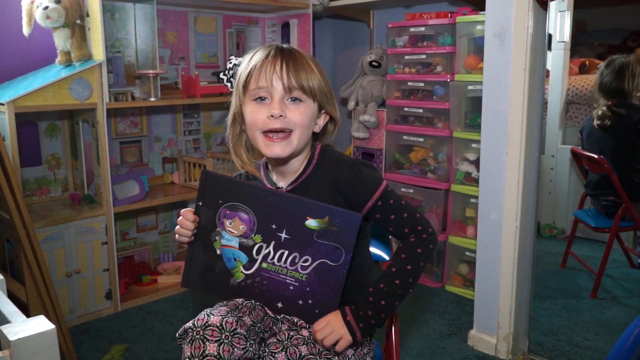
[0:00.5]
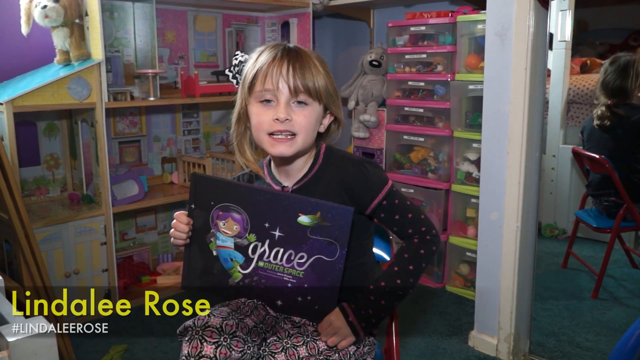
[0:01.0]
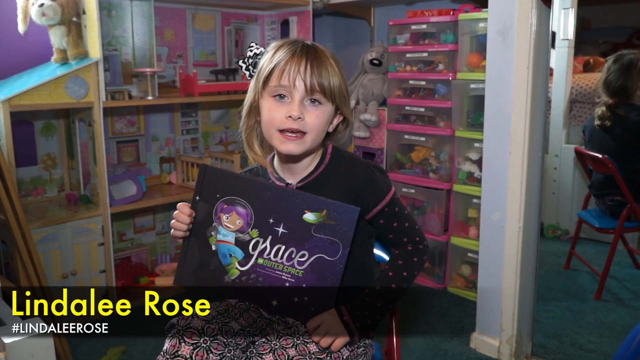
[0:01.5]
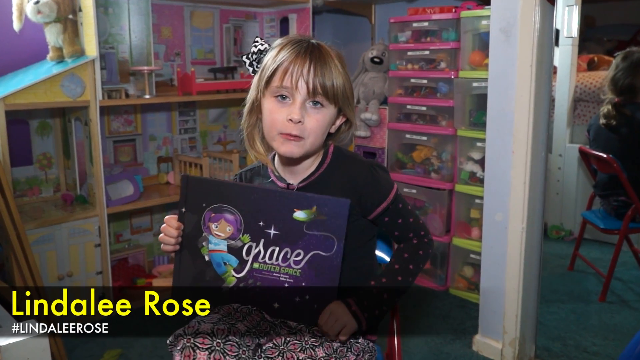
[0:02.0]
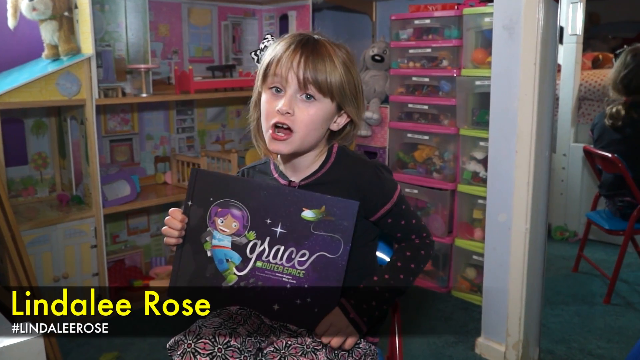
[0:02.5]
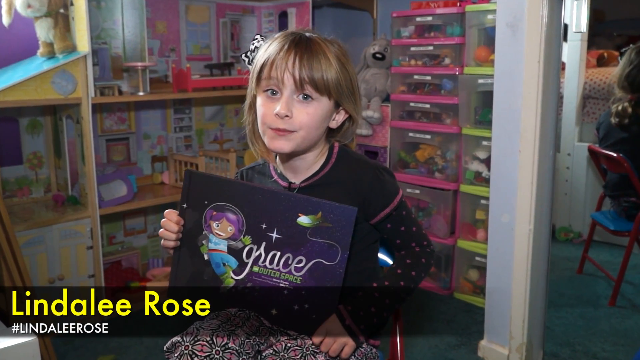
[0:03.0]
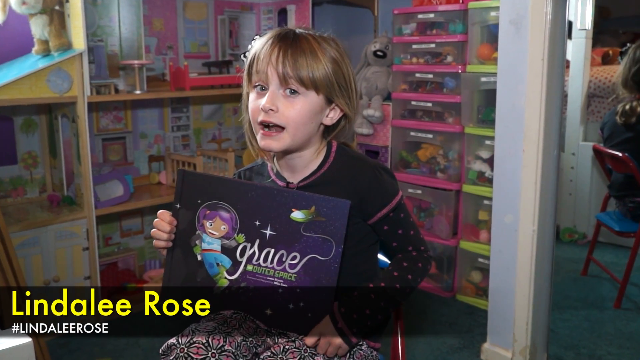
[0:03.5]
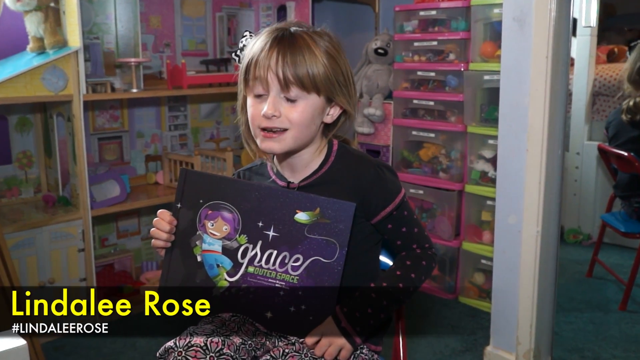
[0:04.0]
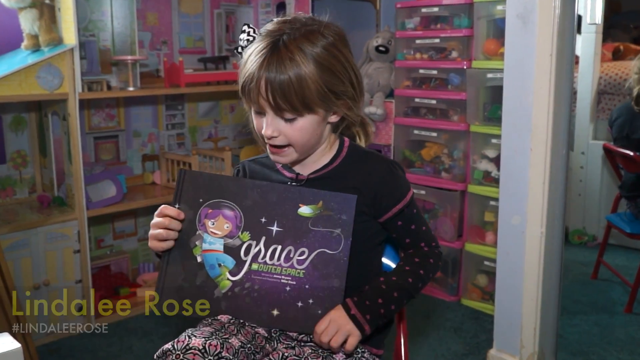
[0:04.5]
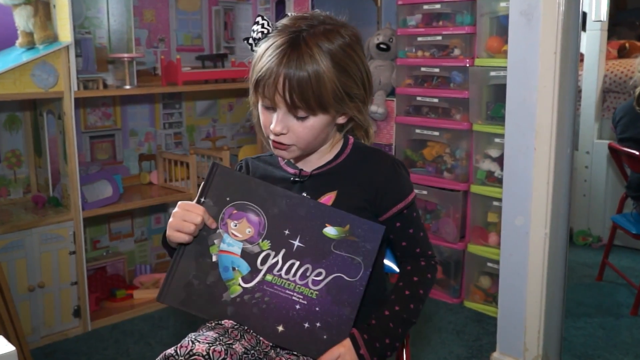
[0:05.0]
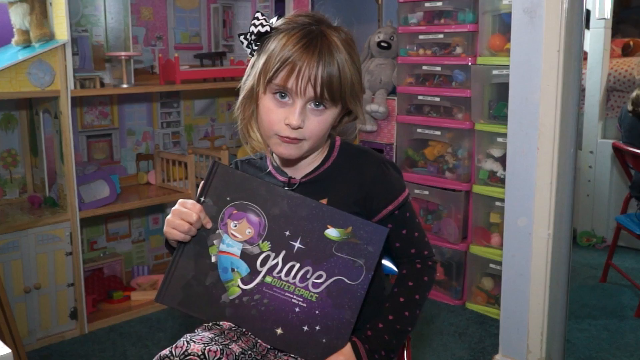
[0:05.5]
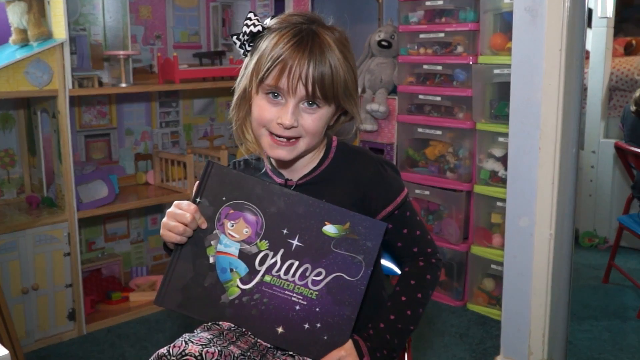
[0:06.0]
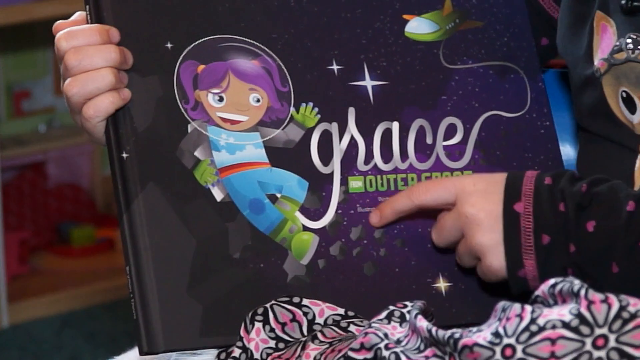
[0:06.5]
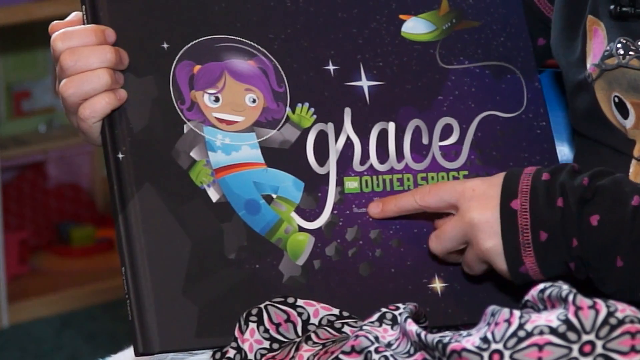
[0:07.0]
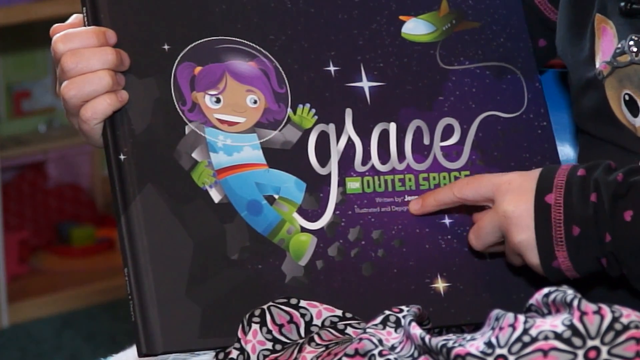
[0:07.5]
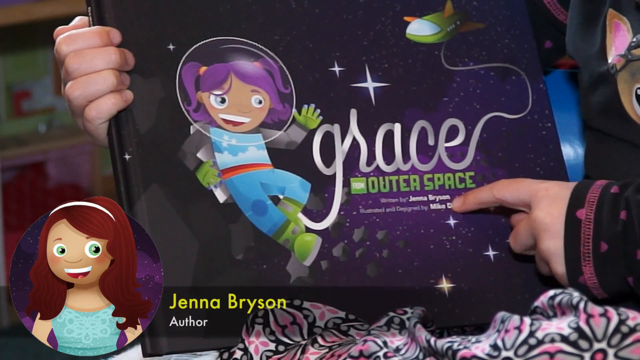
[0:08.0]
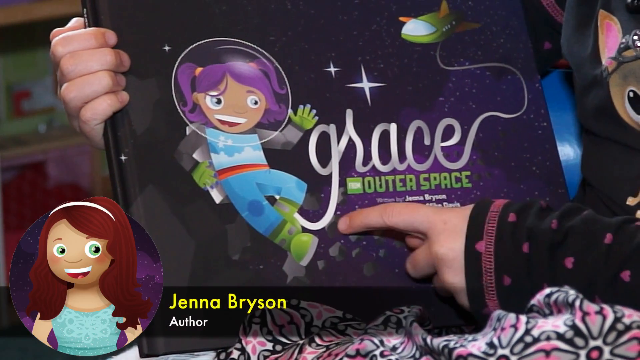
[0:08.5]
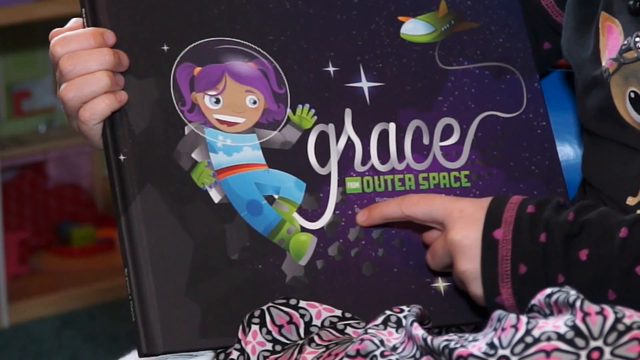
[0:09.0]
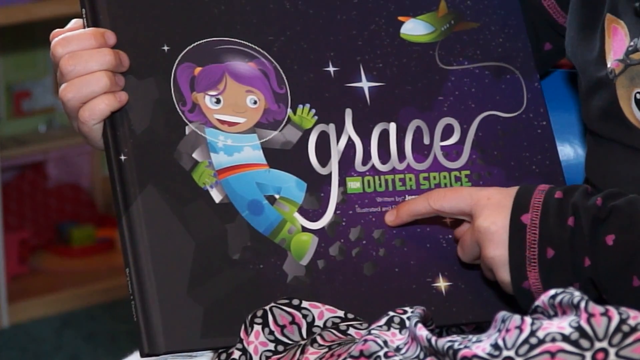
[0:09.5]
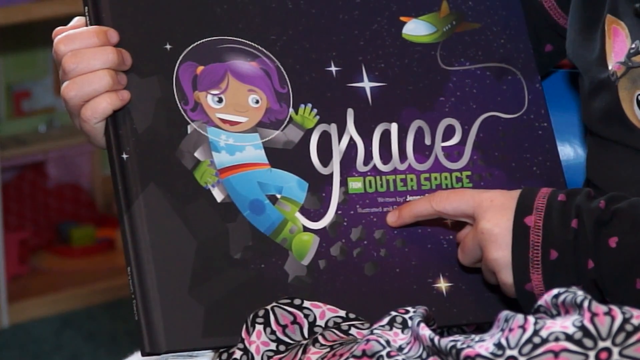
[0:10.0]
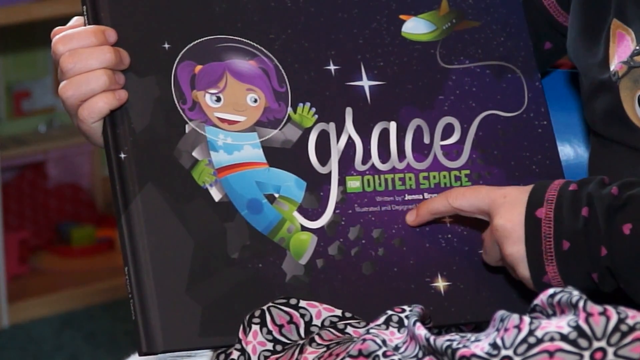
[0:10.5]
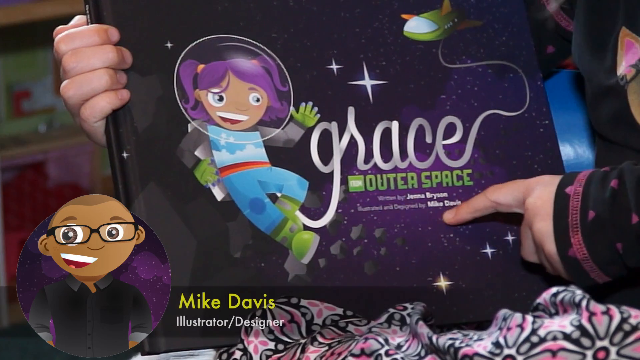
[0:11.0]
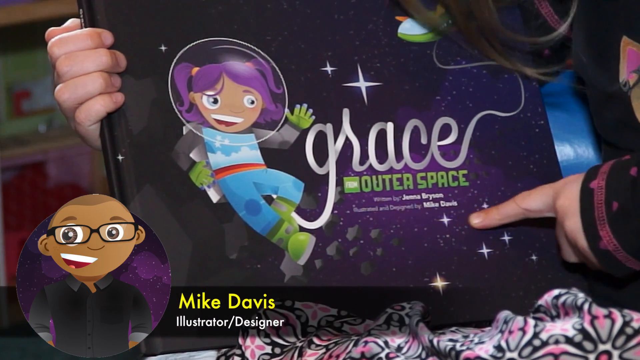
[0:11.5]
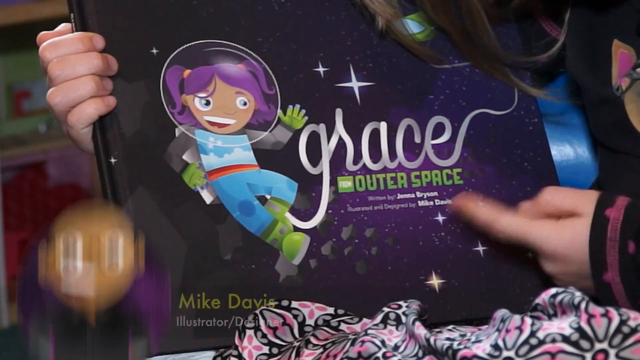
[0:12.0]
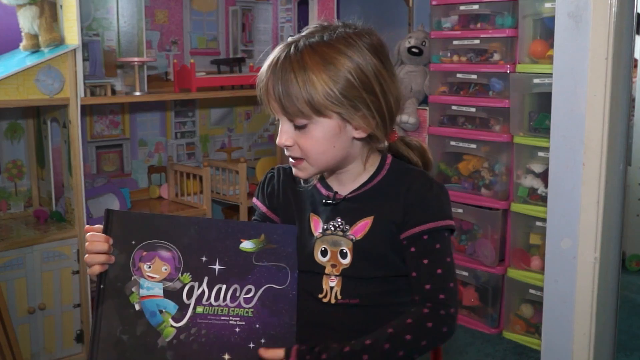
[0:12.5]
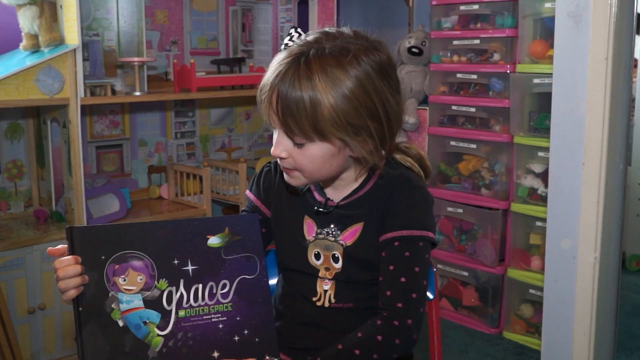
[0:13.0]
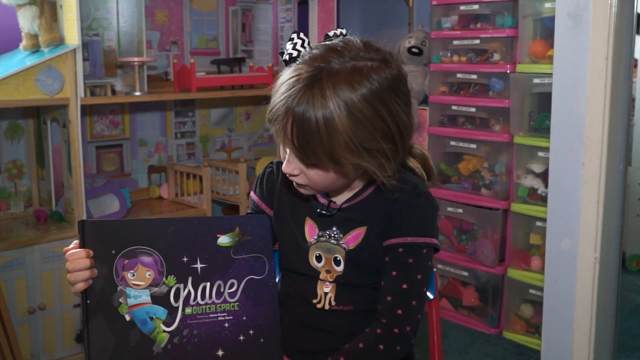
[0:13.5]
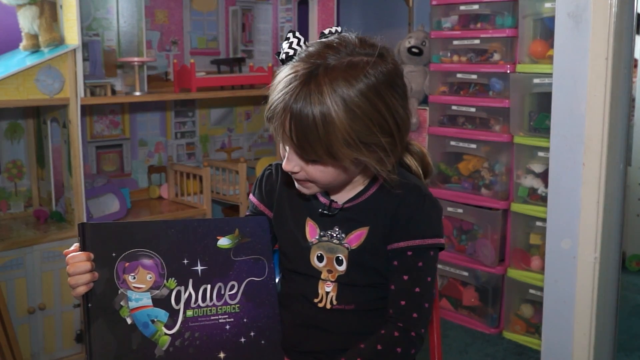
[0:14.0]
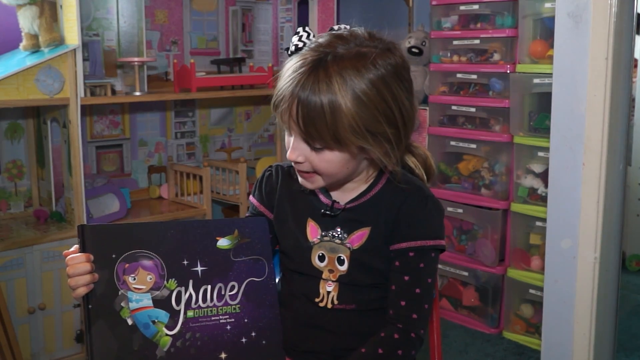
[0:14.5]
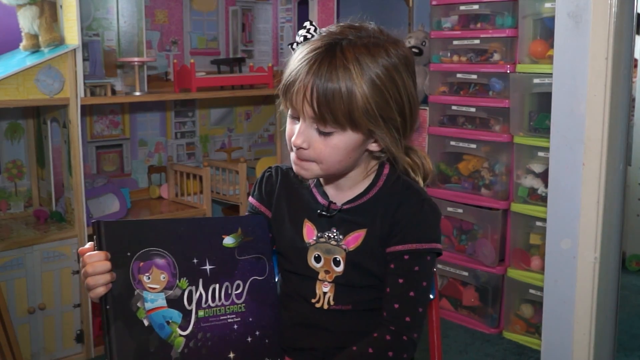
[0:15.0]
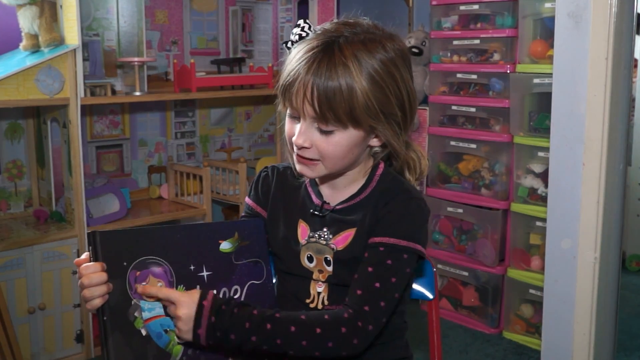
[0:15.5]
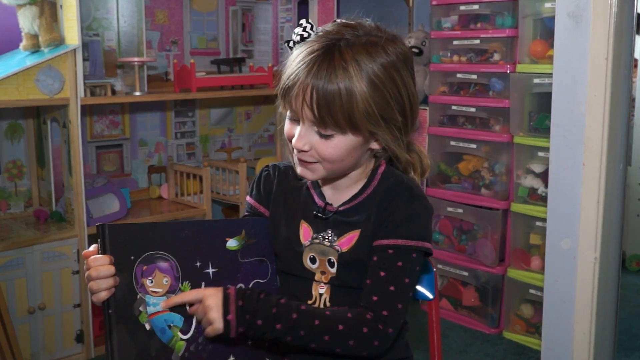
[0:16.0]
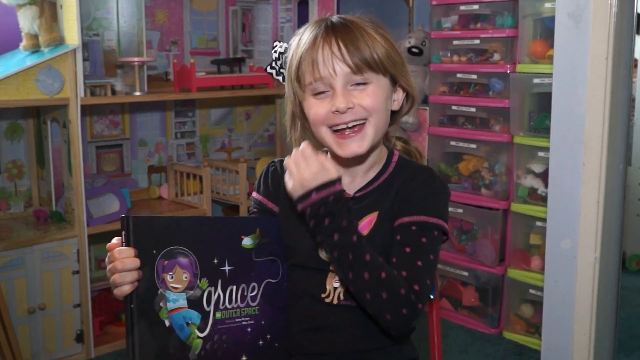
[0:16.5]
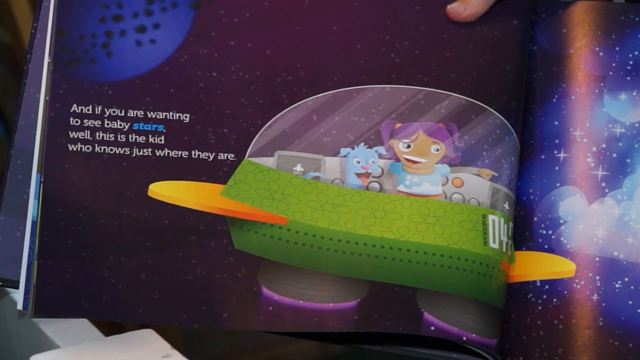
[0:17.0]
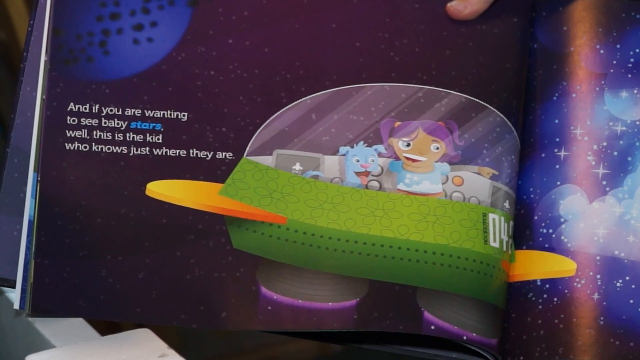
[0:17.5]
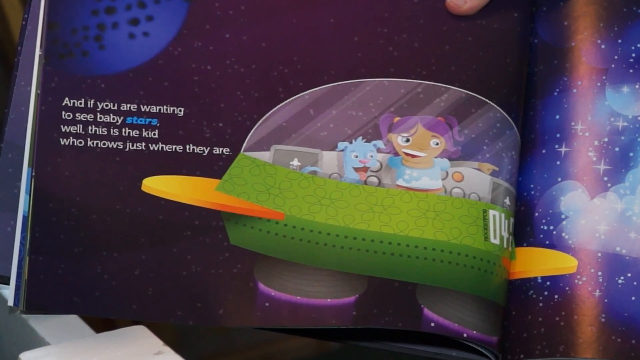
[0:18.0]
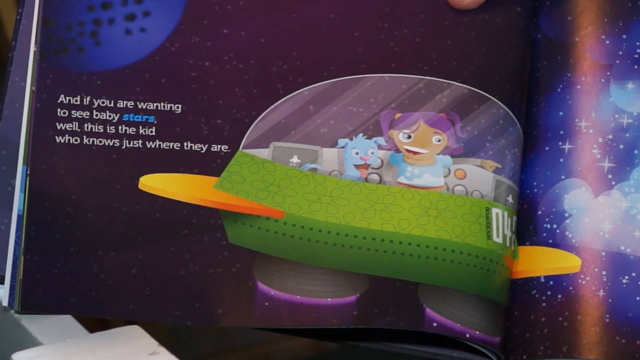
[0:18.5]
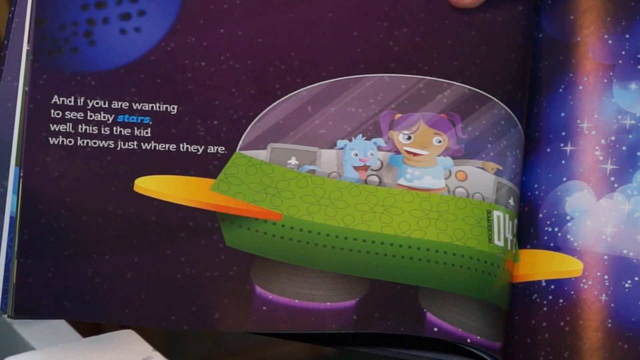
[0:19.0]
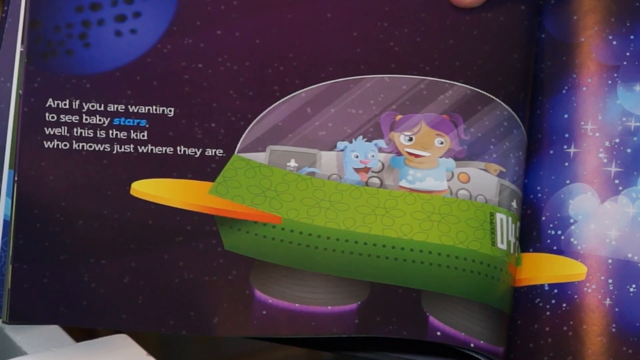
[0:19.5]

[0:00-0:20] A young girl in a black and pink jumper and a flowered skirt sits on a chair talking to the camera. She has a black and white bow in her hair and holds a book called Grace. The girl's name is LindaLeeRose. She is in a room with a large doll's house, and on the left and at the back there are lots of storage boxes with toys. A brown floppy-eared rabbit sits on some storage boxes behind her. The cover of the book shows a girl astronaut in a space helmet, connected through her name to a spaceship. The girl talks to the camera, looks down at her book and smiles as she talks. In a close-up of the book, she shows that it was written by Jenna Bryson and illustrated and designed by Mike Davies. Her jumper has an image of a dog with big eyes wearing a tiara. She points to the girl astronaut with purple hair, who is smiling and waving, and laughs. A close-up of one of the pages shows the astronaut sitting in a spaceship with a blue dog, and the girl is pointing. The page reads "and if you are wanting to see baby stars well this is the kid who knows just where they are".